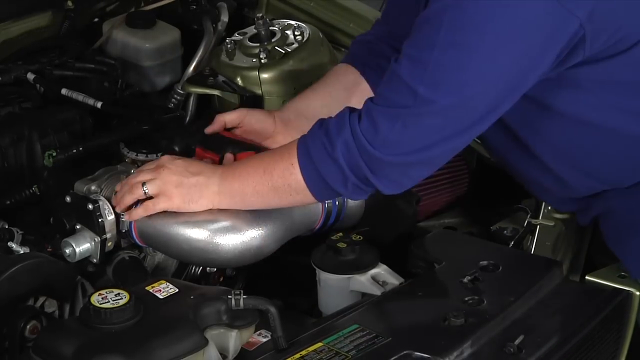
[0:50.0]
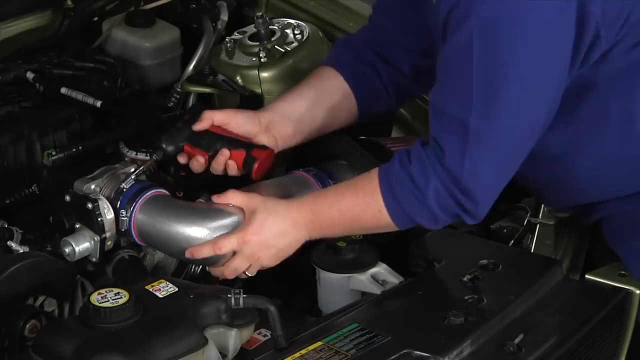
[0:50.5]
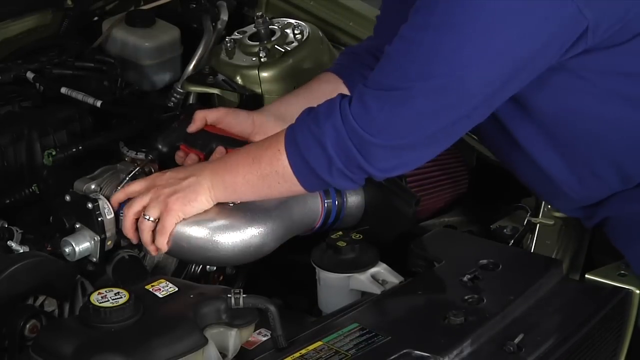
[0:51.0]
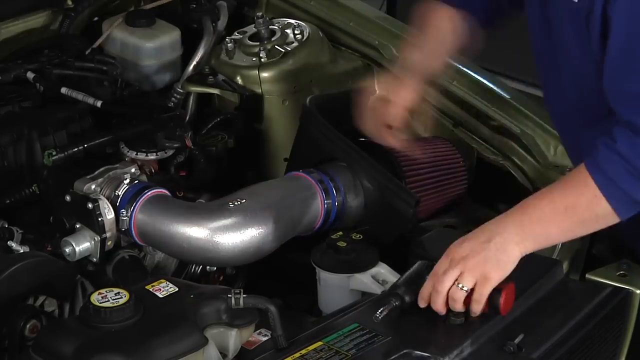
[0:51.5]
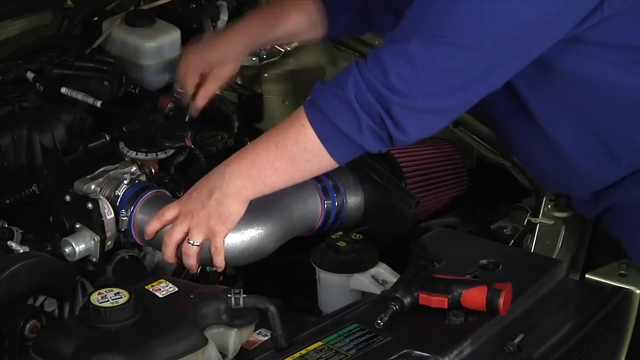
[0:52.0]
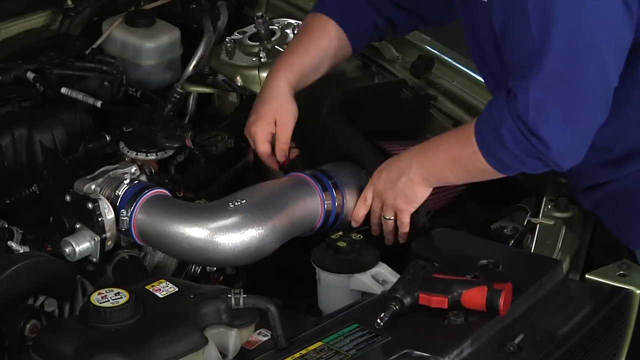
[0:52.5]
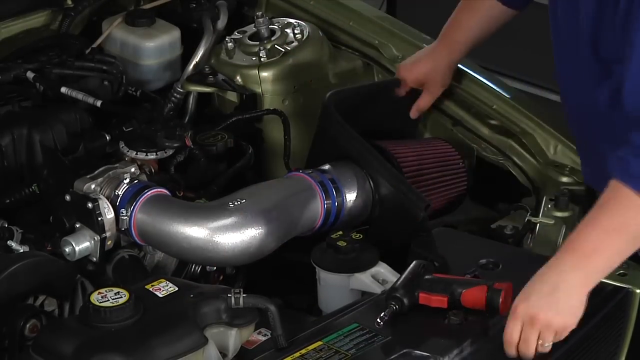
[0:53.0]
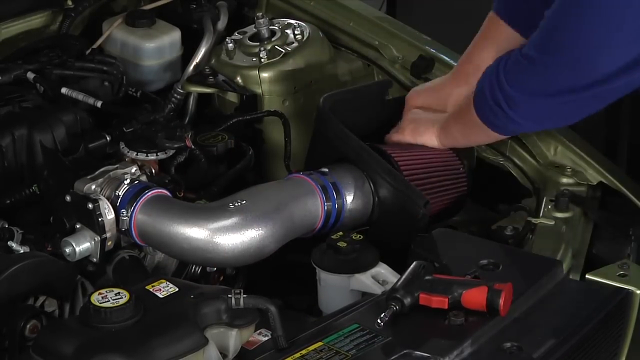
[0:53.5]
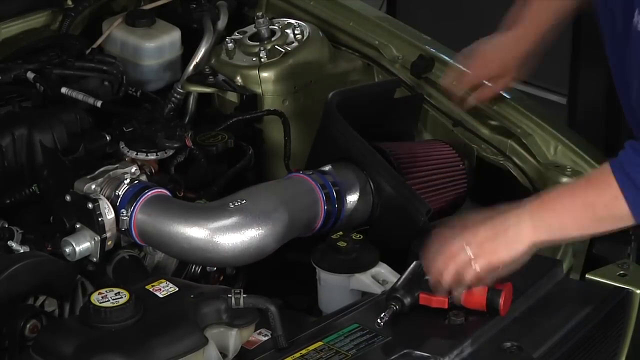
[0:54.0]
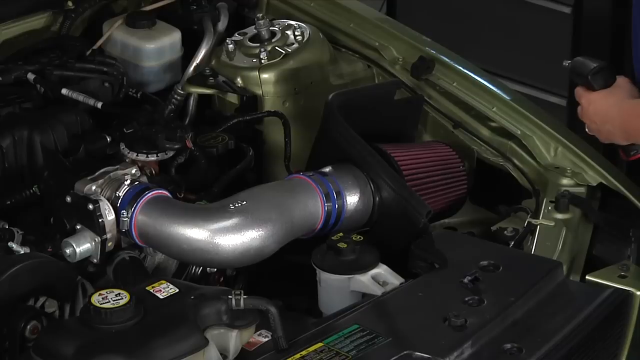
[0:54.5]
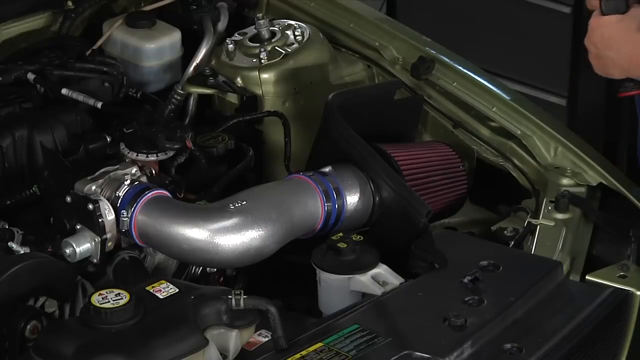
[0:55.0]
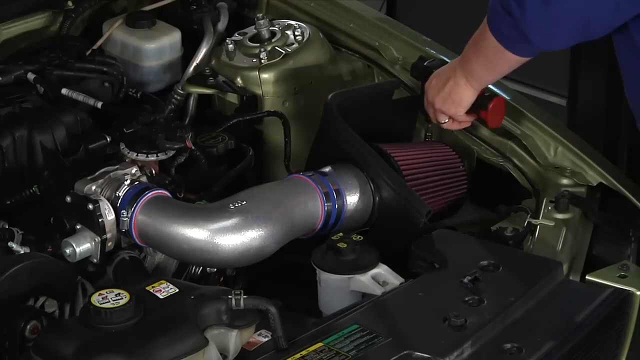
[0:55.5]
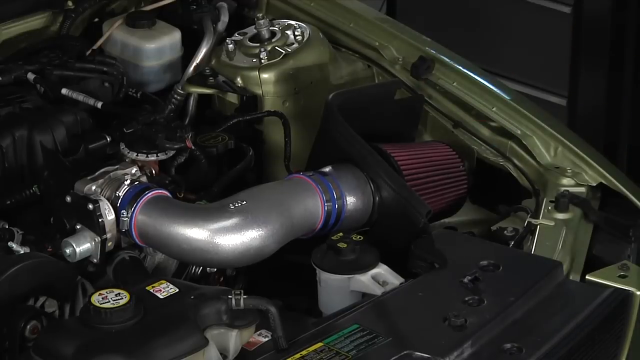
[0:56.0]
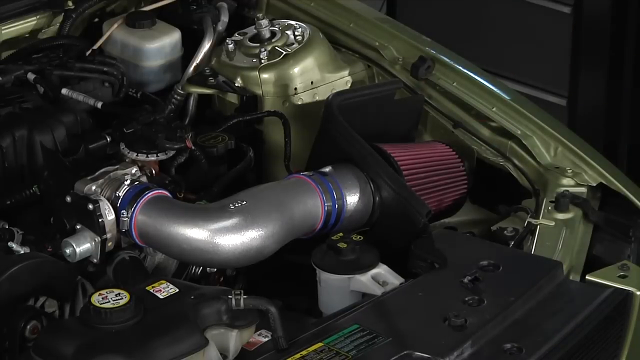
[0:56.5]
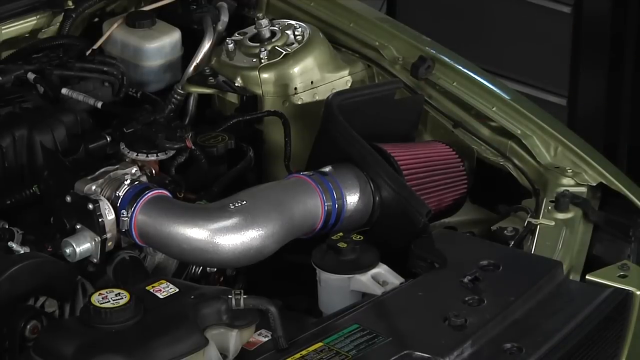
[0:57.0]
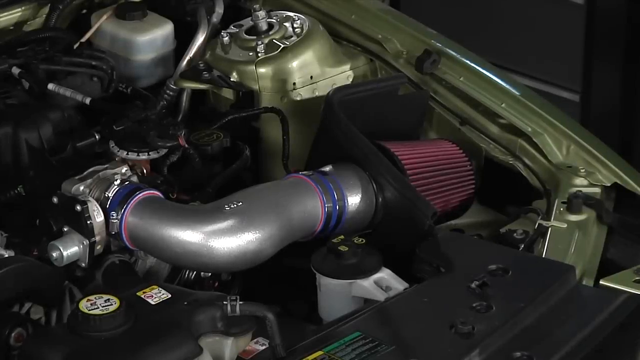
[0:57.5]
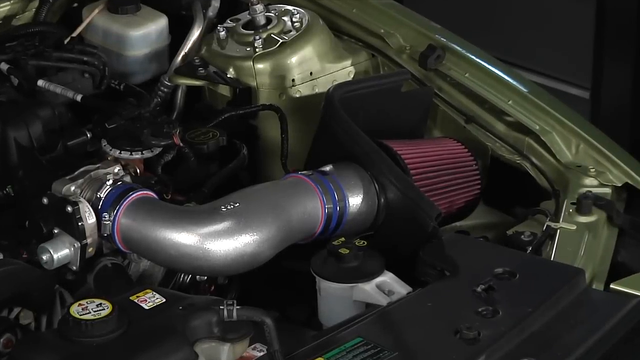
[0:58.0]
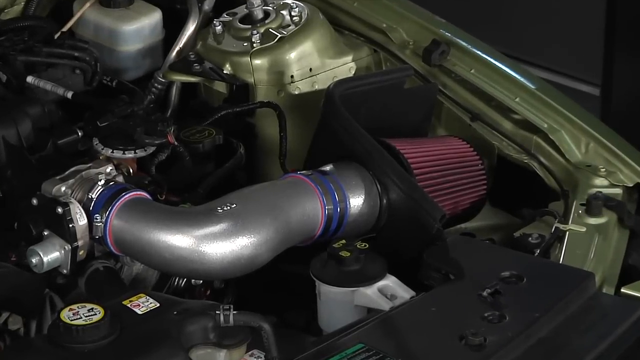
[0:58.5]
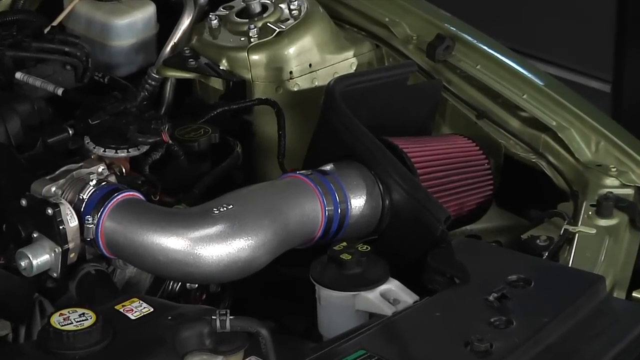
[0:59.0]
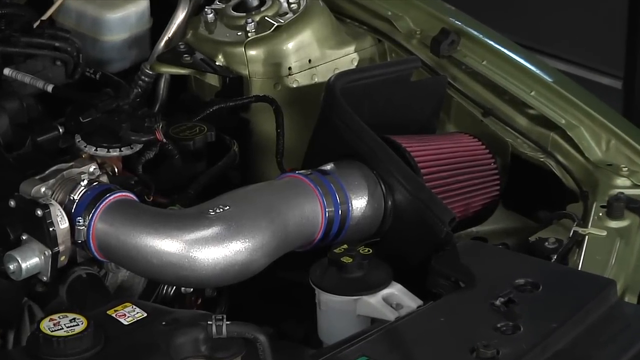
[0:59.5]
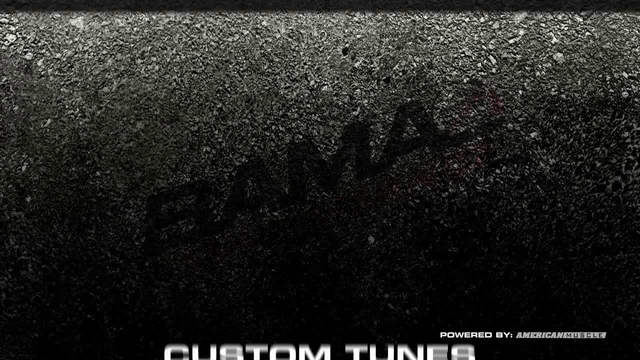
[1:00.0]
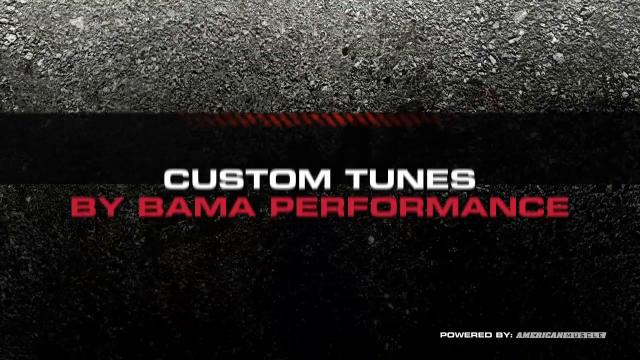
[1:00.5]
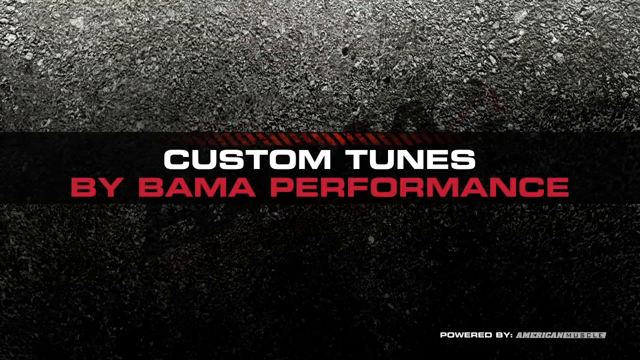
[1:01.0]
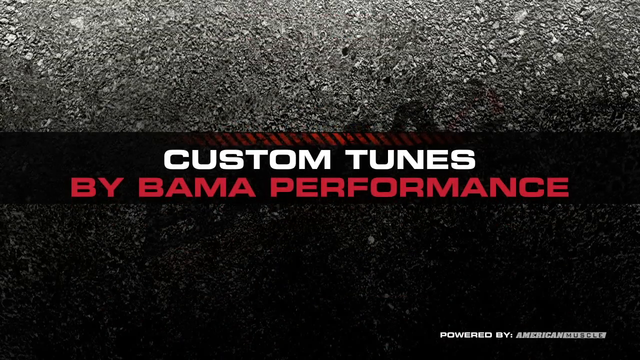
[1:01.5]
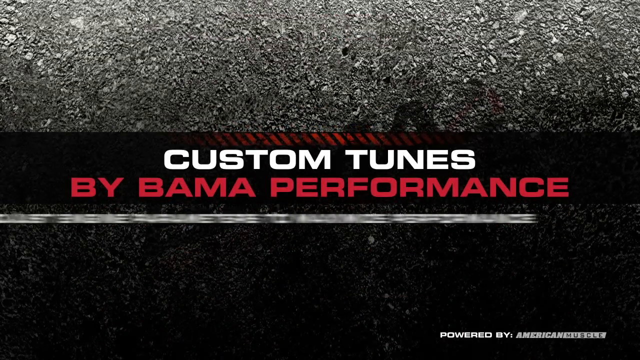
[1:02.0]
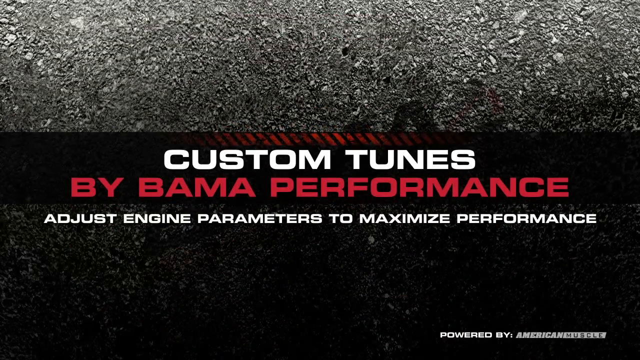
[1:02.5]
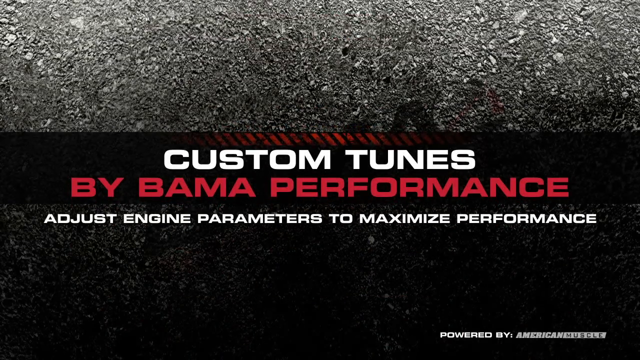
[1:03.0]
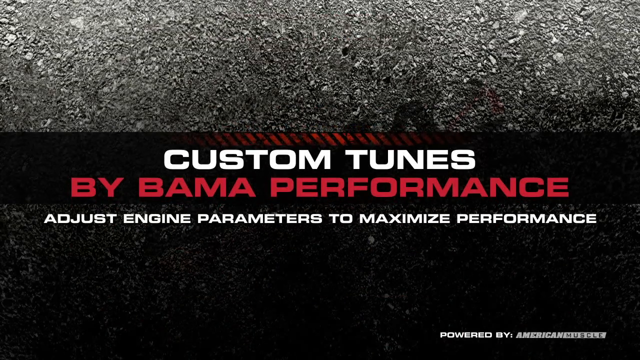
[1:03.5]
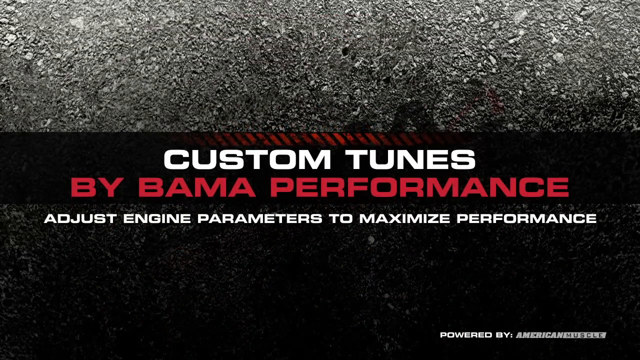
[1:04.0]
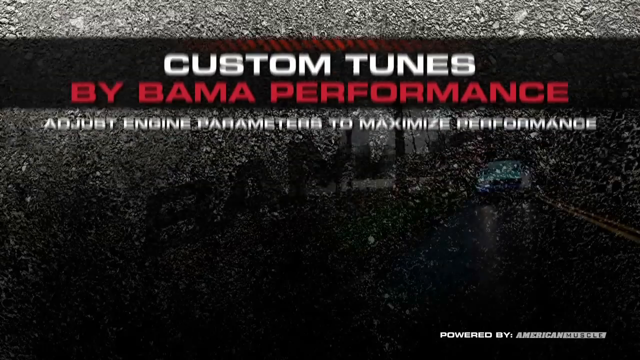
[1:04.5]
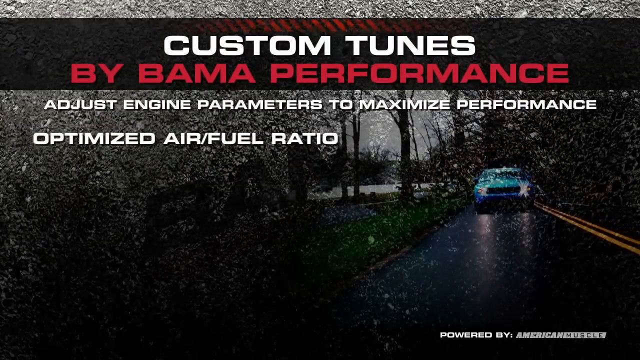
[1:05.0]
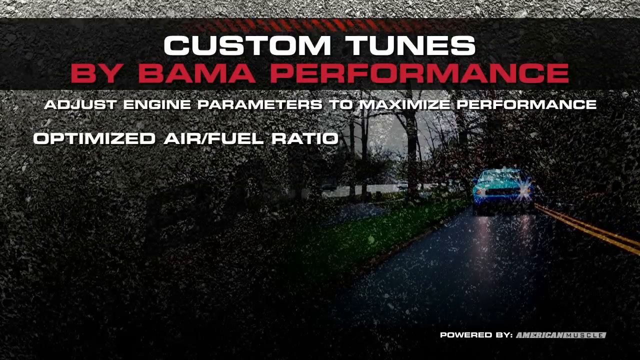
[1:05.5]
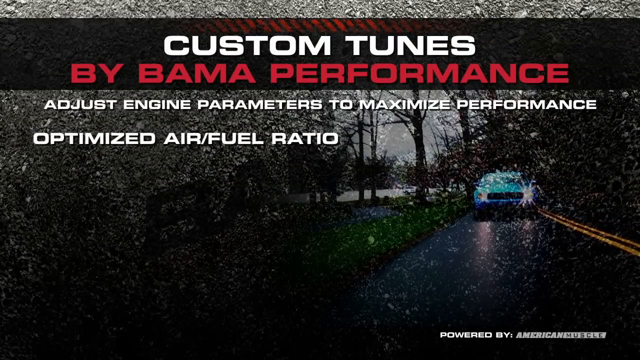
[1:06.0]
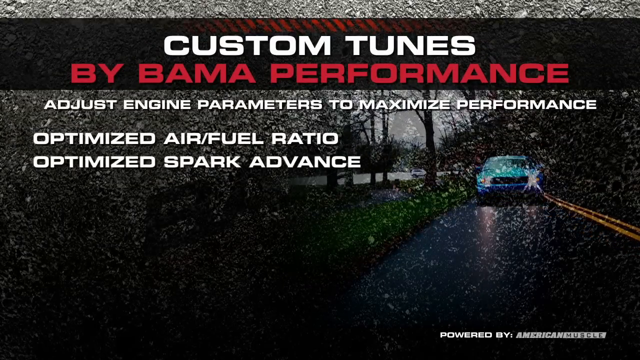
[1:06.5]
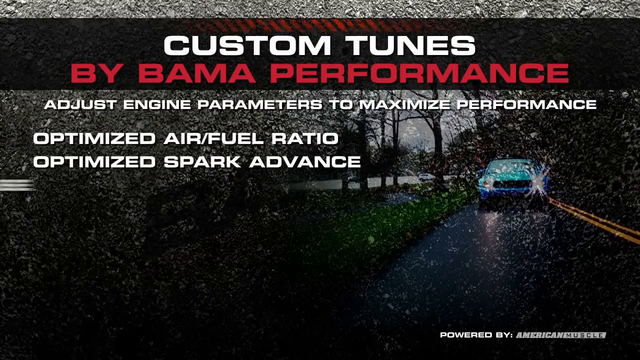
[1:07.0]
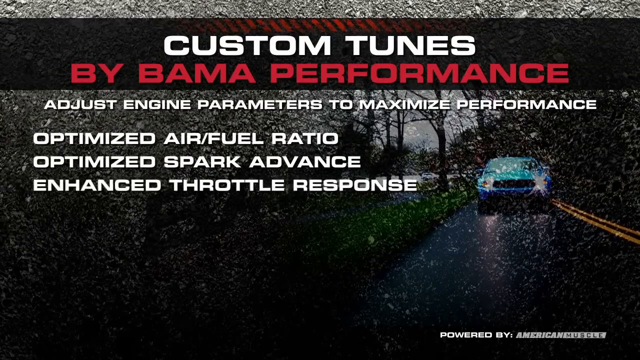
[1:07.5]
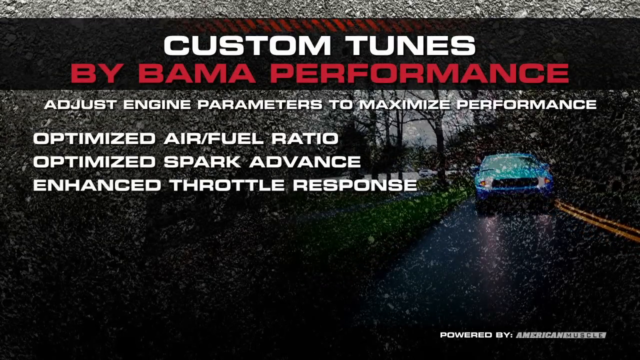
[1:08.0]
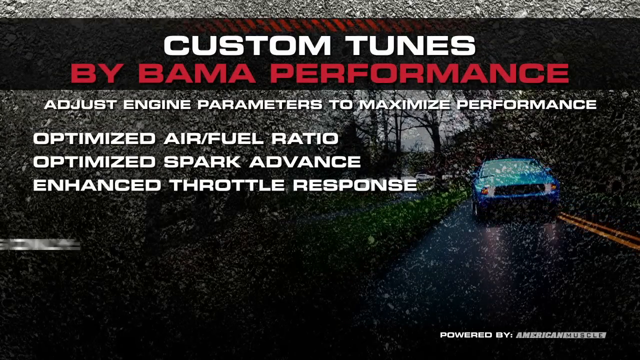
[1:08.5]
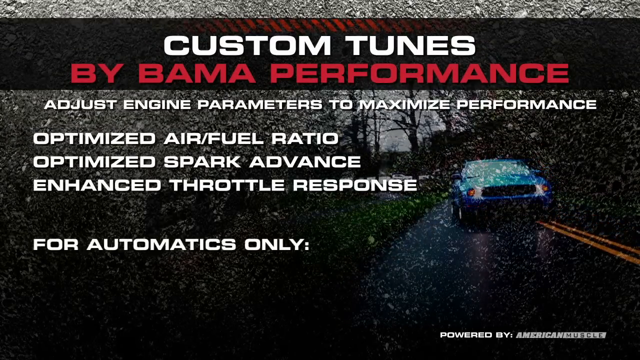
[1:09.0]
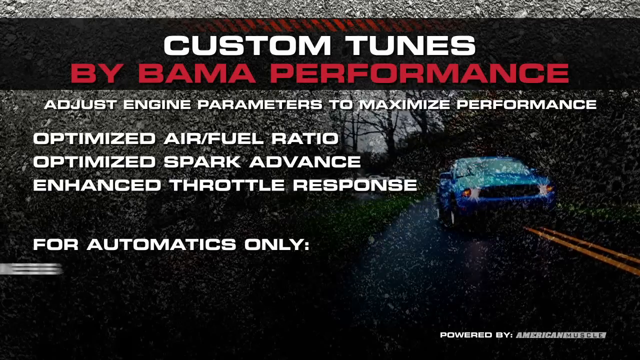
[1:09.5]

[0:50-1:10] A single man is partly in view, with both arms and his body visible. He has a white skin tone and wears a long-sleeved blue shirt rolled up to near his elbows, and there is a silverish ring on his left ring finger. His left hand is on a metal part inside the open hood, on top of the engine, apparently the intake, and his right hand holds a red and black device that he apparently uses to screw the intake on. He screws the intake on, tightening it all around to make sure it is secured properly. He then leaves the scene, and a close-up shows the installed intake, which is primarily silverish metal with some blue and pink straps on the top and bottom ends. The scene changes, and text appears in the middle of the screen: "custom tunes by Bama Performance," with "custom tunes" in white and "by Bama Performance" in red. More white text pops up below it: "adjust engine parameters to maximize performance." Further text appears on the left side of the screen, while on the right side a video plays of a car driving on a road toward the viewer.